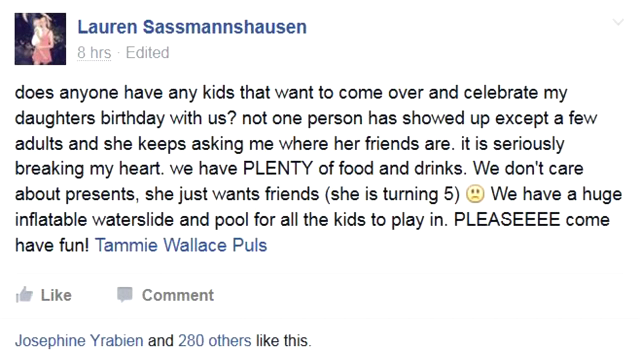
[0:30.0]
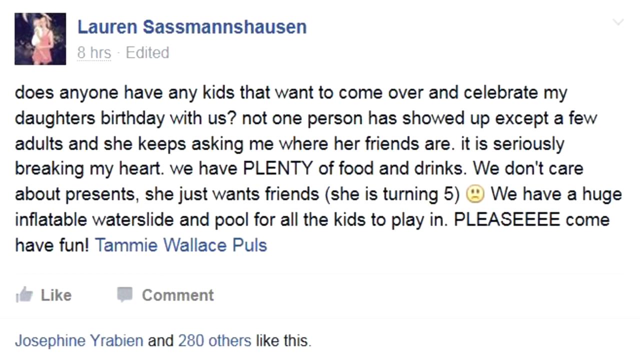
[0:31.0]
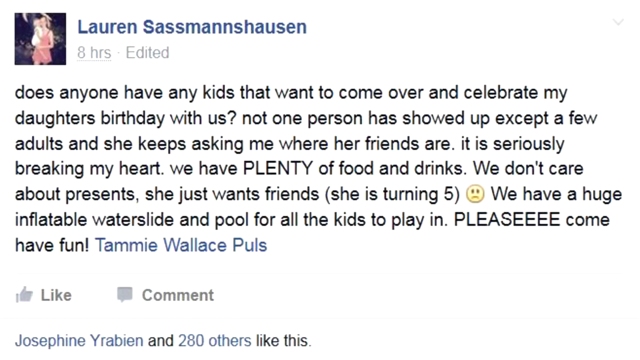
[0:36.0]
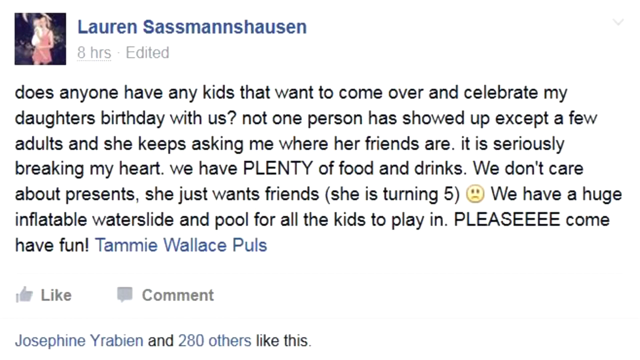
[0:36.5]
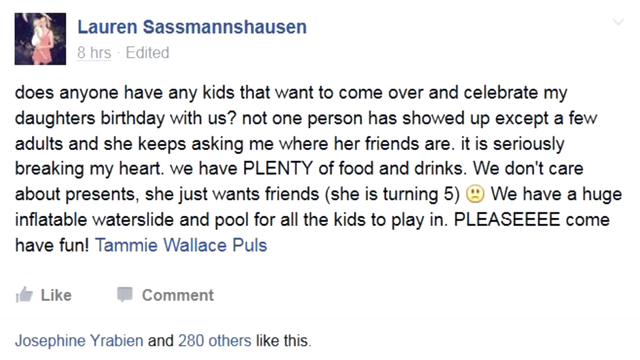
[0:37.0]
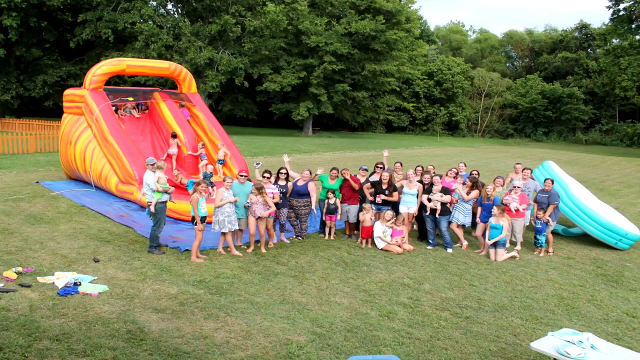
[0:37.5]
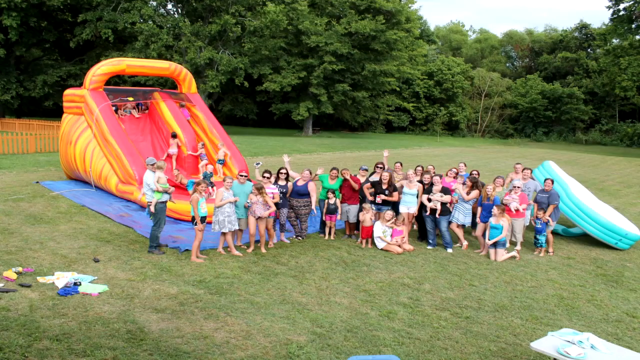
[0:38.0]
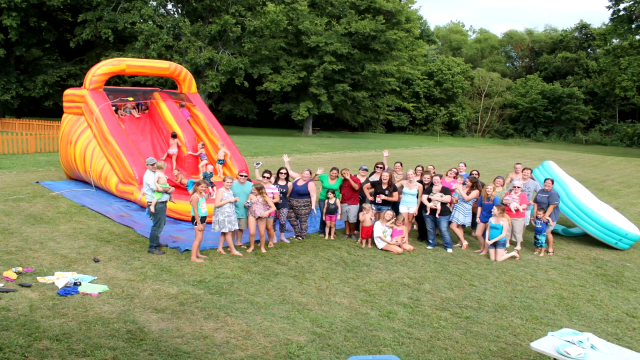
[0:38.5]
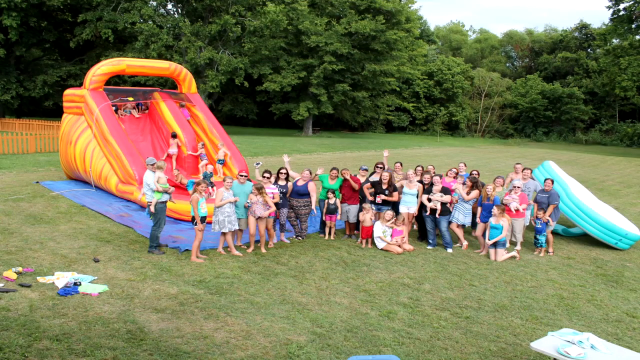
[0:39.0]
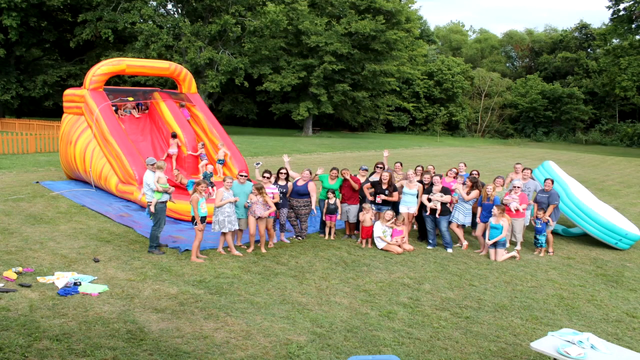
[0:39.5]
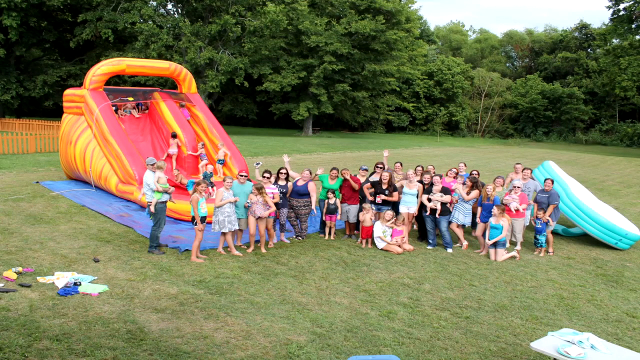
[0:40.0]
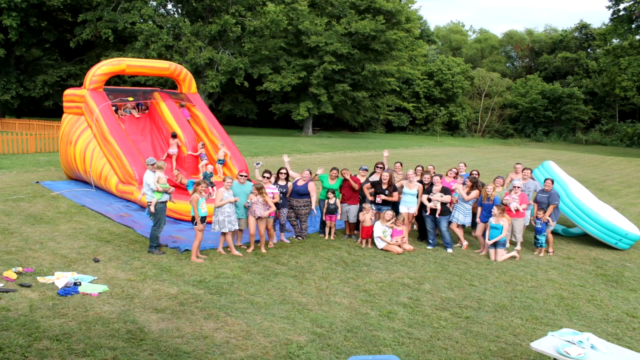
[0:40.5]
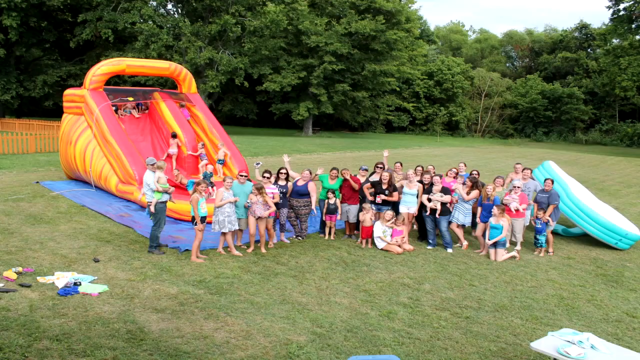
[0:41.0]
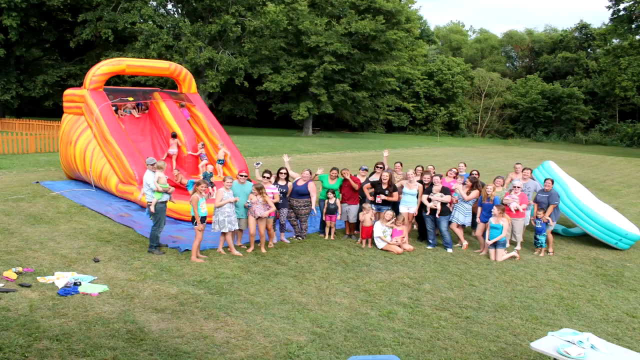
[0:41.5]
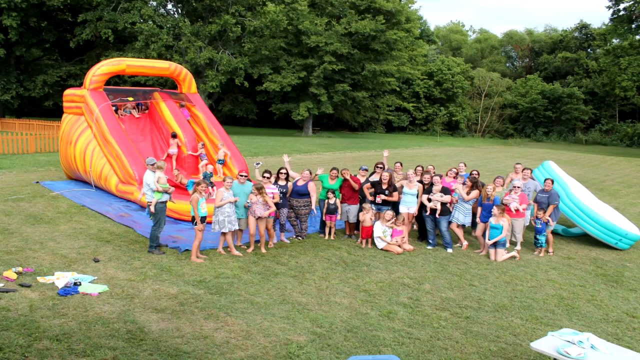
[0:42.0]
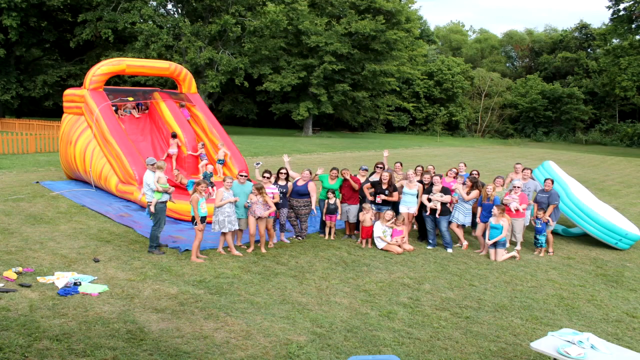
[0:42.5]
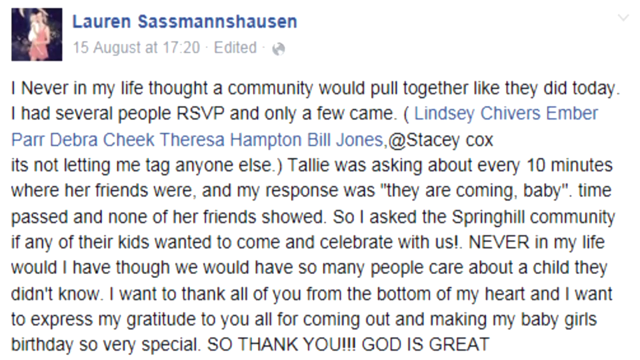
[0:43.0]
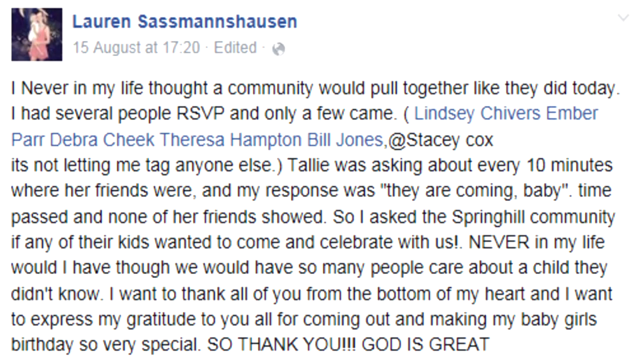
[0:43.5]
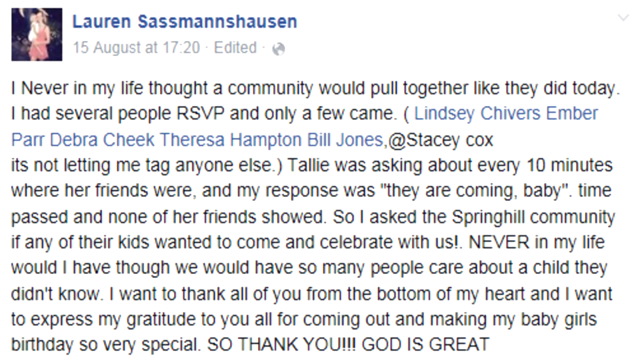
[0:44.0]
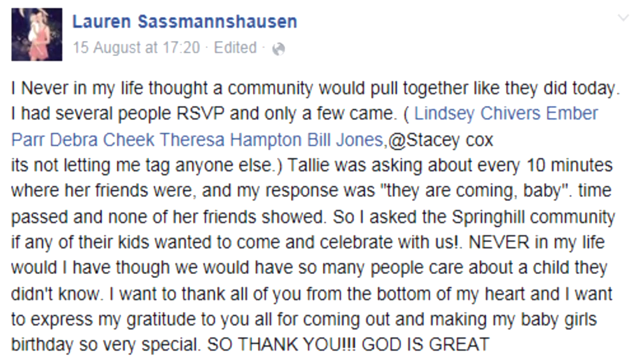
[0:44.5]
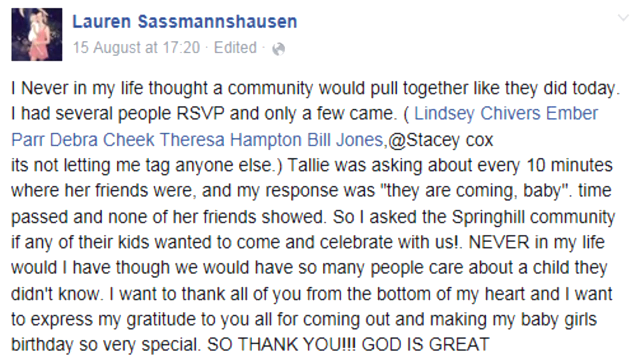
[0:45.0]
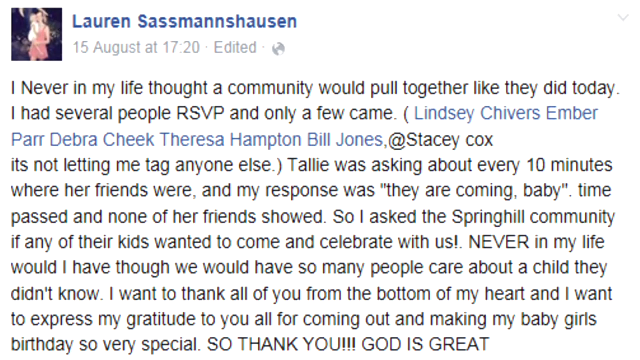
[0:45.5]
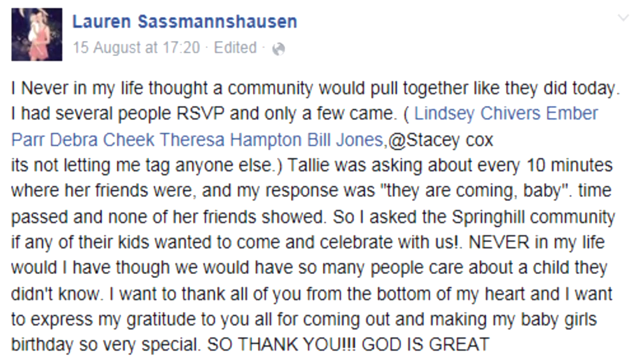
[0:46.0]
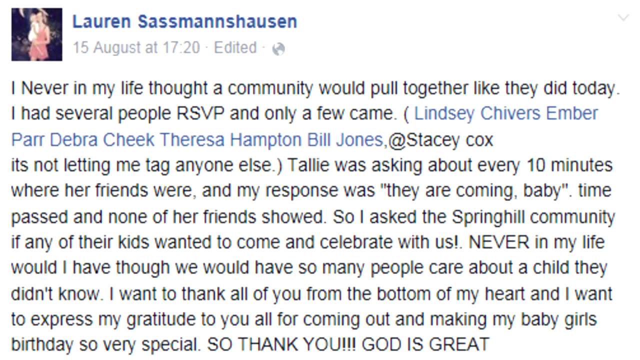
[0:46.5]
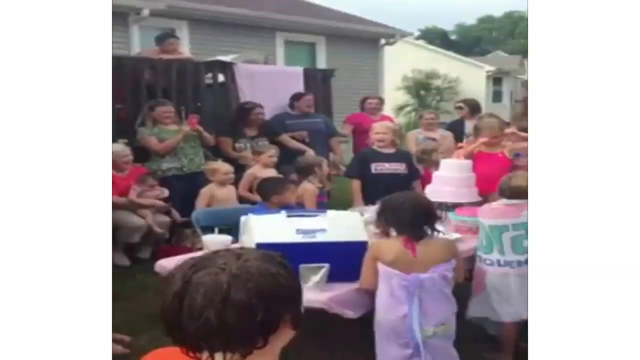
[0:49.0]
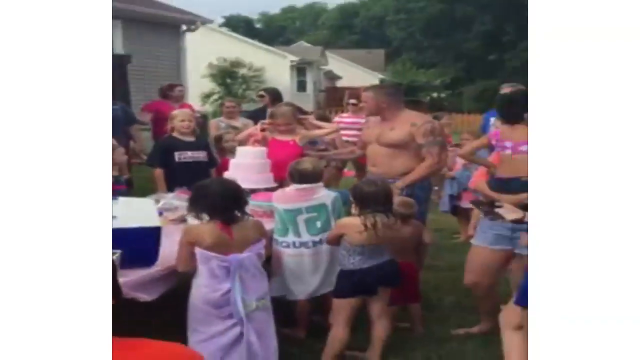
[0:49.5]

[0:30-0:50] The page by Lorraine Sussman remains on screen, with a like button and a comment. Kids are on a green field, and a water jump has been set up on the green lawn. There are trees around the house, and people are there with their children and families. Male and female teachers are seen. The page appears again, and then the video returns to the earlier scene, where a woman in a very short dress is seen.